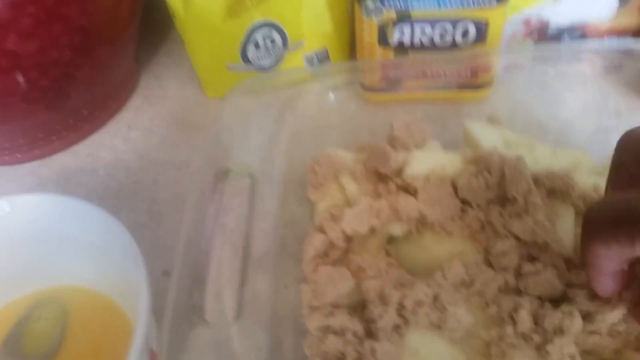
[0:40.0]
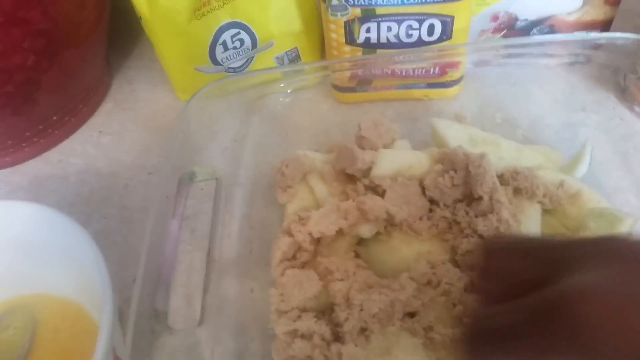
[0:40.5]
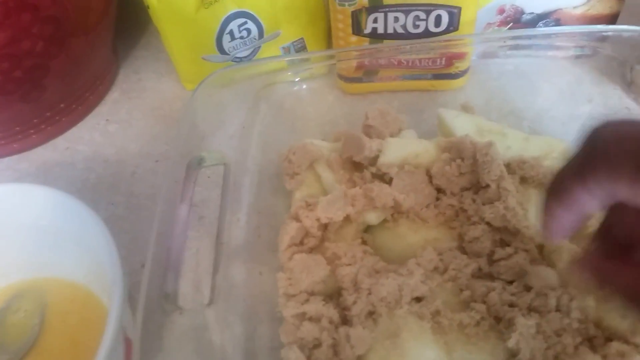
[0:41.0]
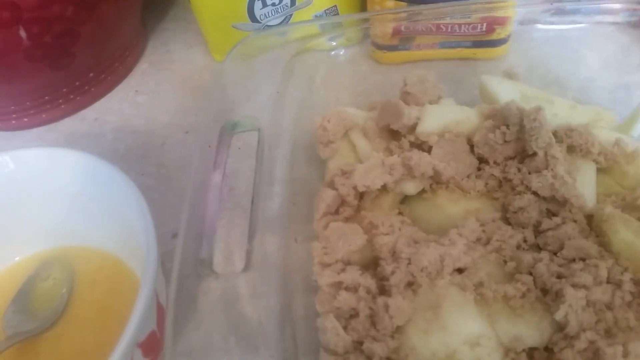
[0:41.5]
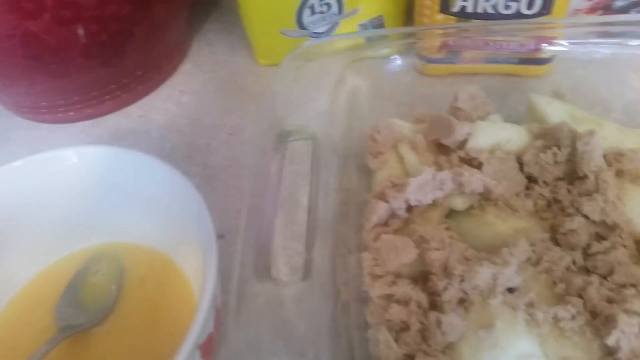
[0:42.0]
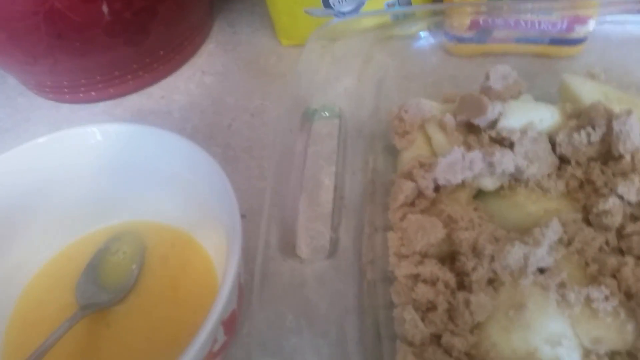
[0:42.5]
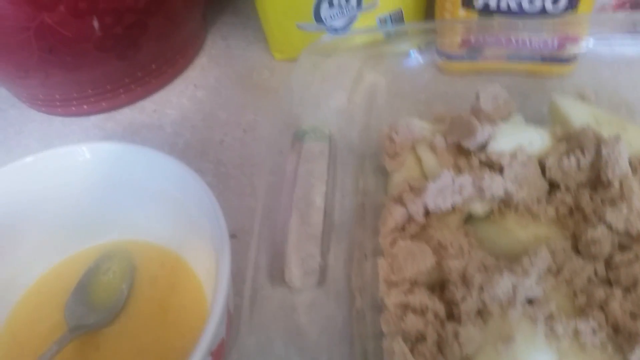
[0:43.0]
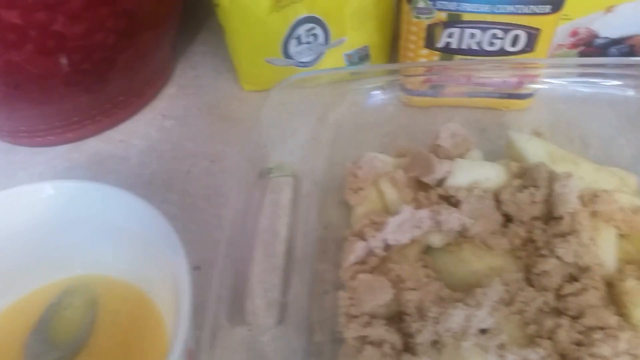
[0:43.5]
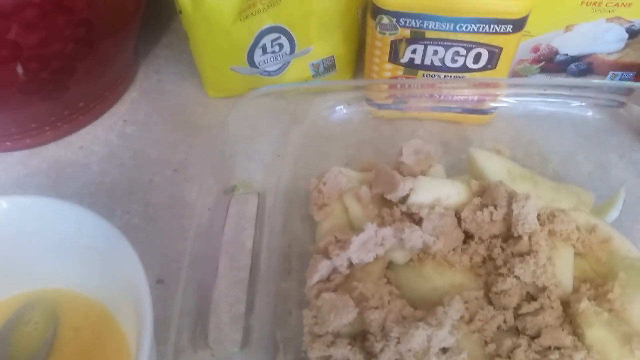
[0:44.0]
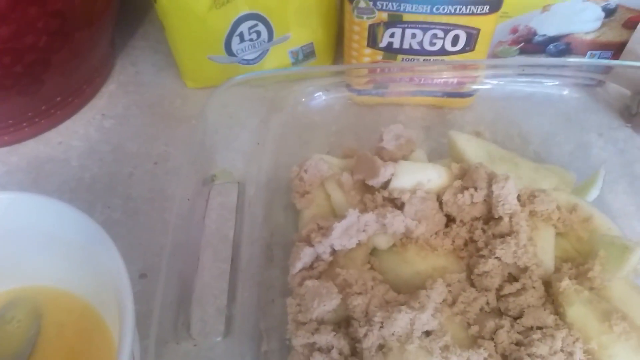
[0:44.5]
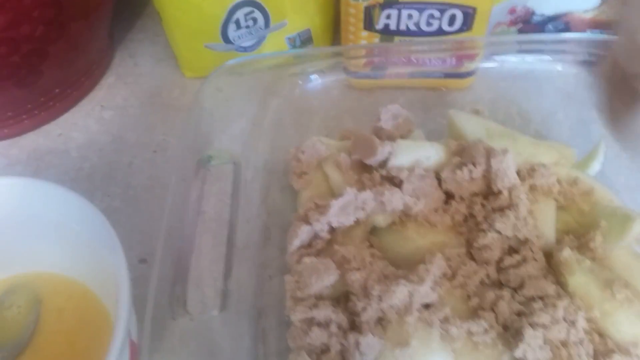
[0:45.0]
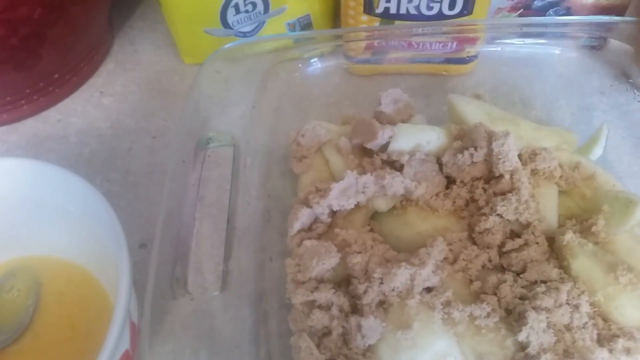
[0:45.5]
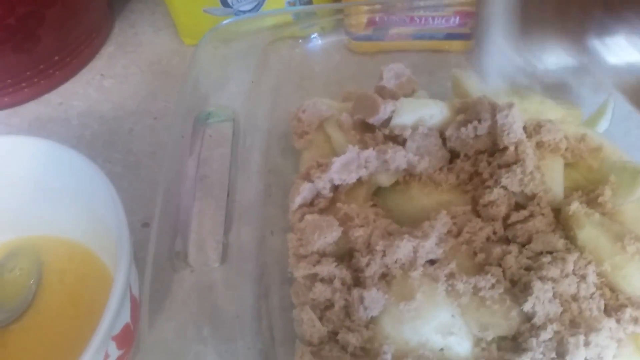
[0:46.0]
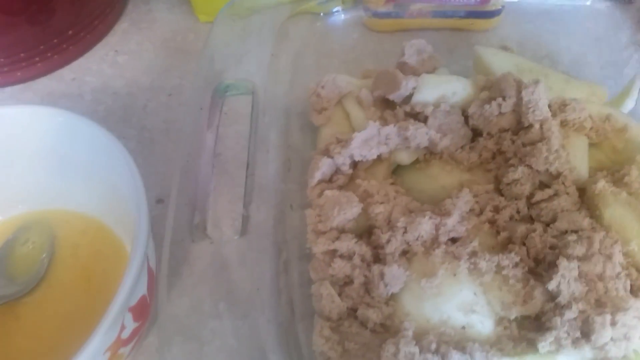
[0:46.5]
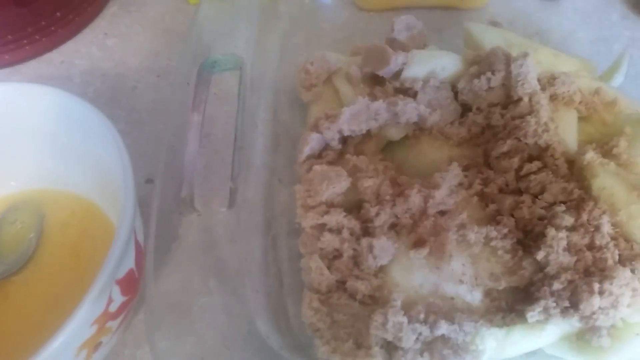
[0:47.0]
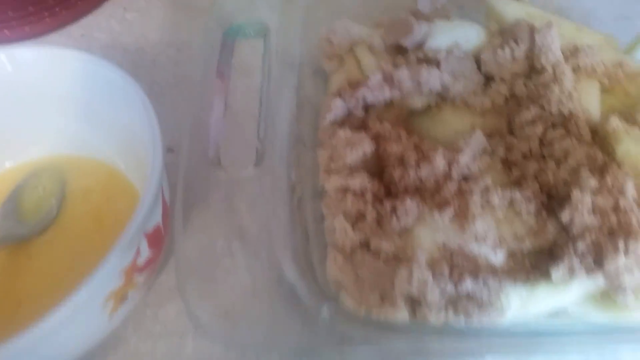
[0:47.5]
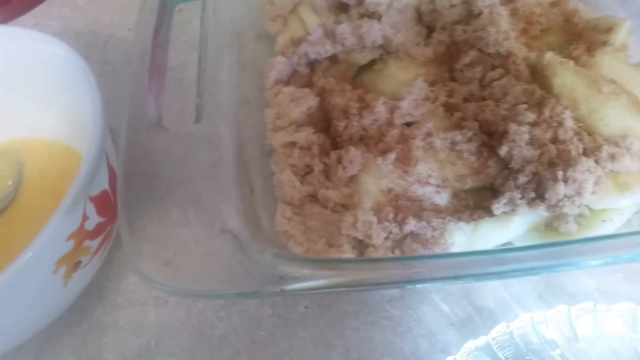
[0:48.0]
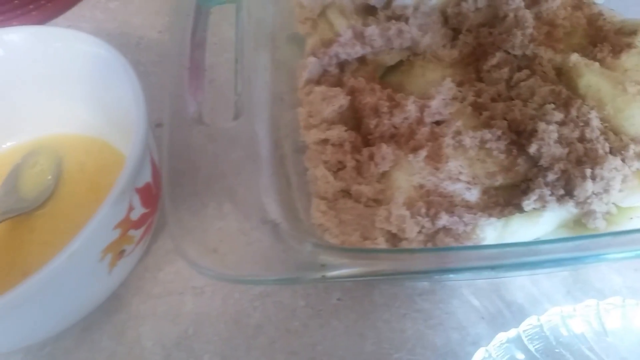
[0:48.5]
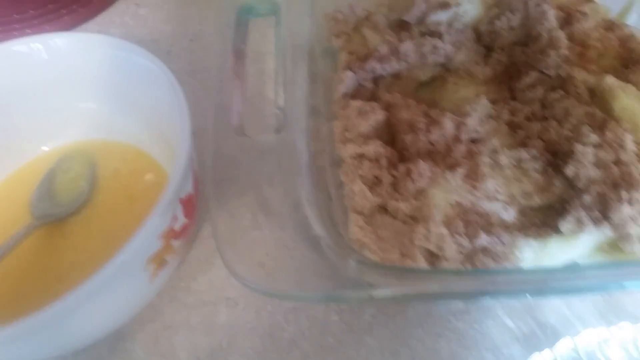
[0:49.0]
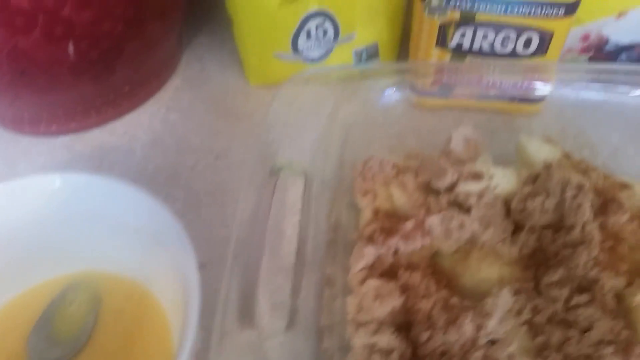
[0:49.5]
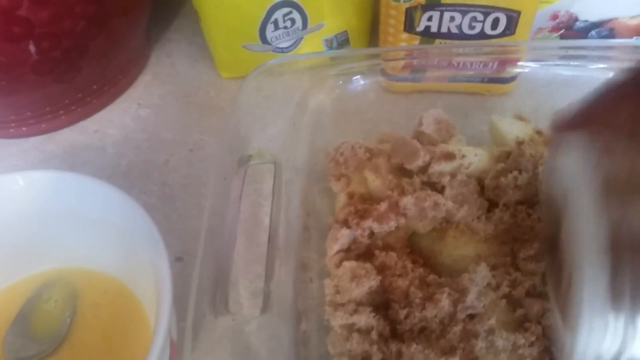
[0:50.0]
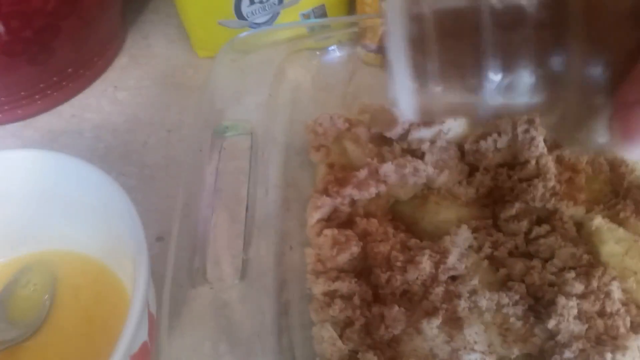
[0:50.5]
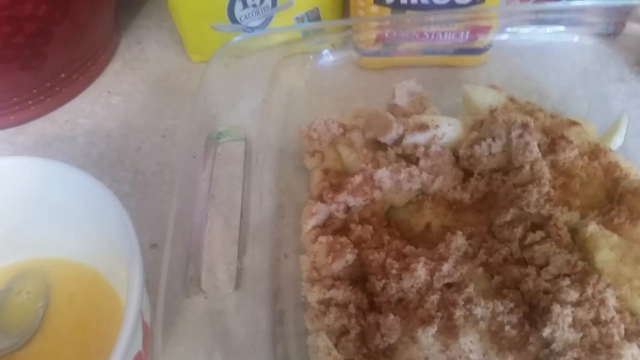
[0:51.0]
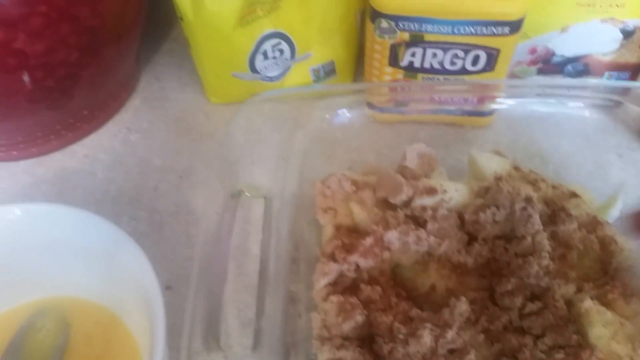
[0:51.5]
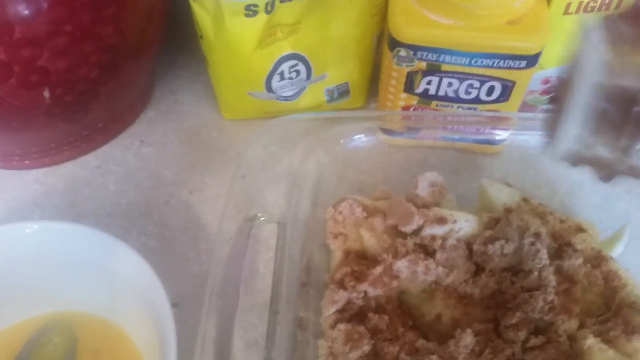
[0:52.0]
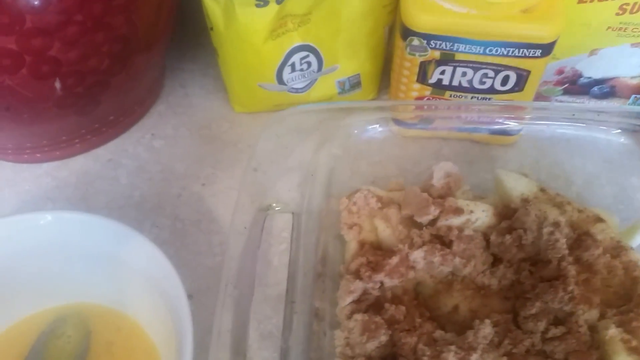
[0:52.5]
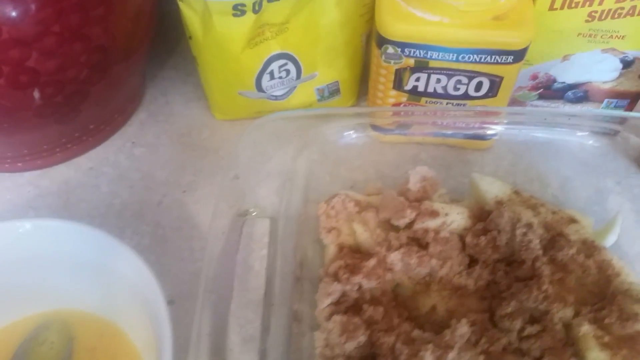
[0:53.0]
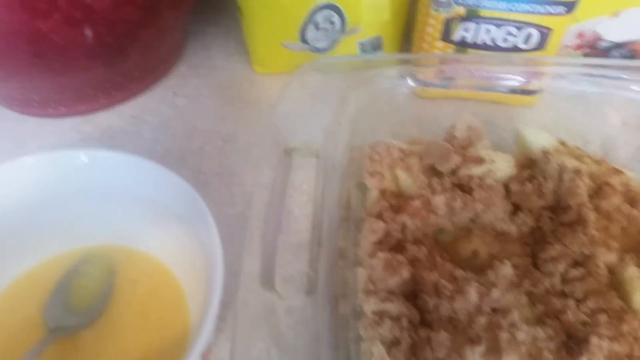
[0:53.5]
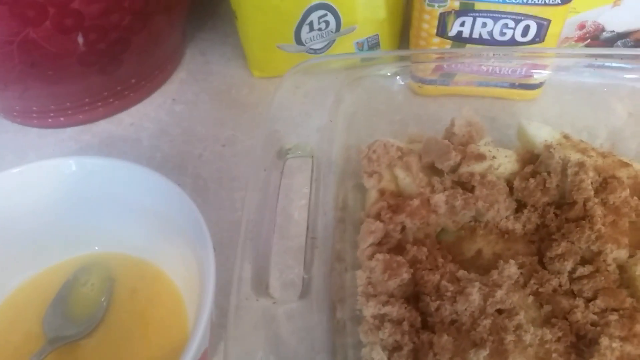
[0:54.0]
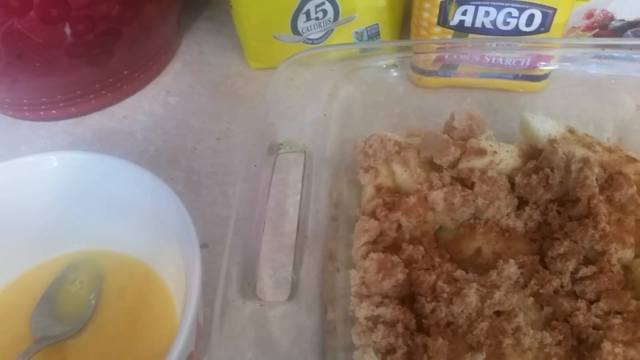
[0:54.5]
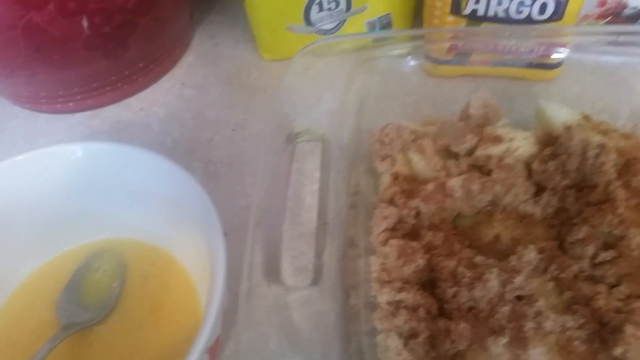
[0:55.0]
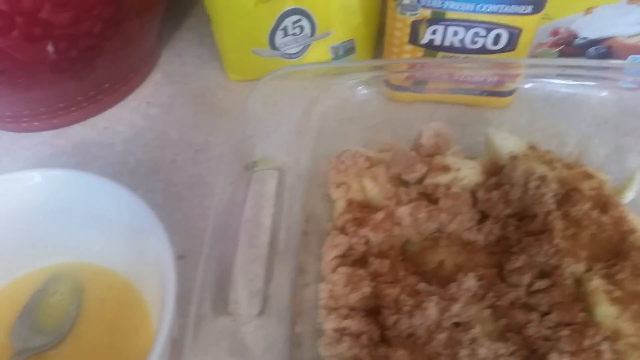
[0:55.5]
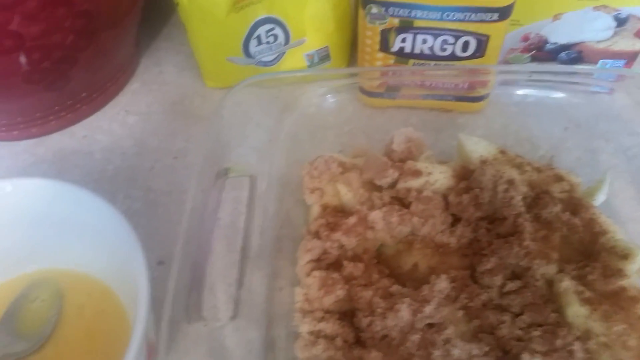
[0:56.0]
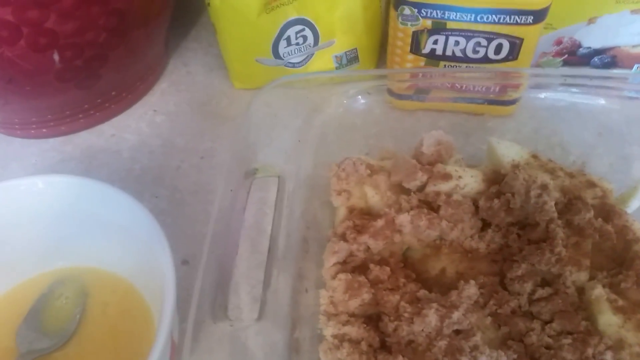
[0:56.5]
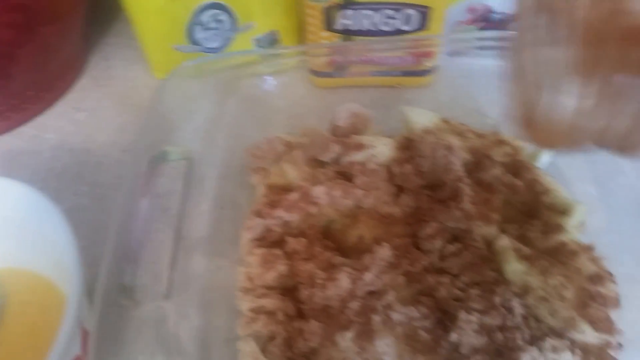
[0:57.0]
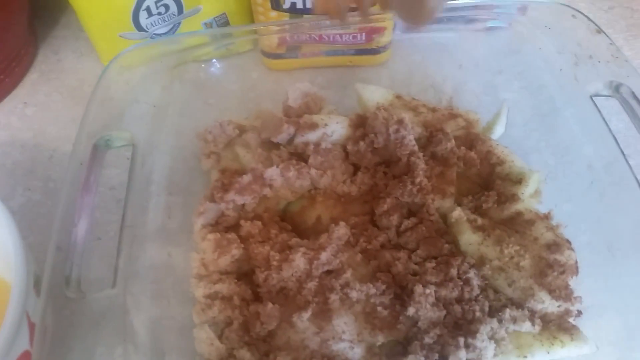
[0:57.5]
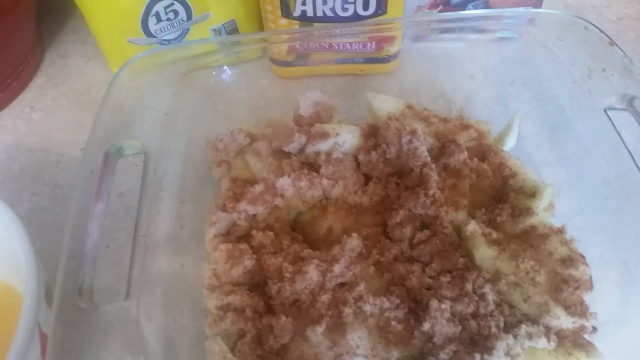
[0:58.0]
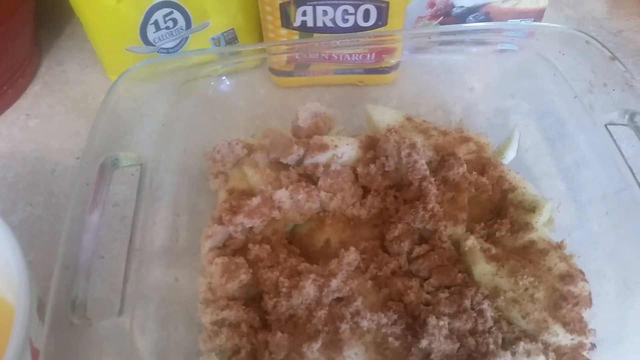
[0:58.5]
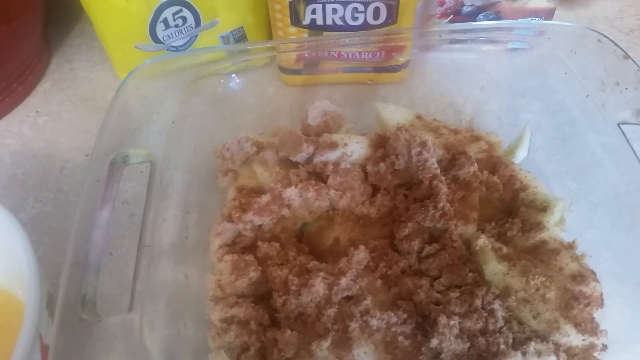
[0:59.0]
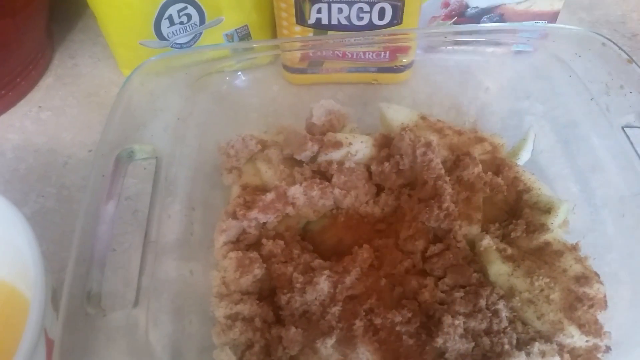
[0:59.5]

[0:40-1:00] The glass dish of apples is shown against a counter-style background, with eggs in a white bowl to the left of the dish and a spoon inside the bowl, with a sort of red base; other dry ingredients are in the background. The camera pans toward the glass dish as the person's brown-skinned hand, the only part of them shown, shakes cinnamon into it. No other people or animals appear, and the setting does not change.